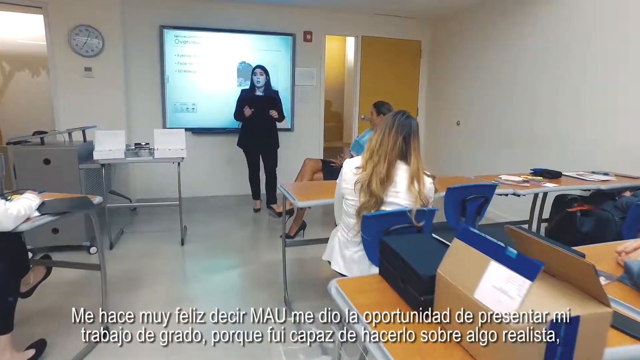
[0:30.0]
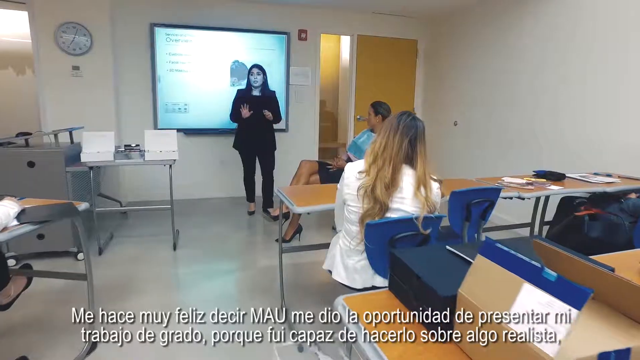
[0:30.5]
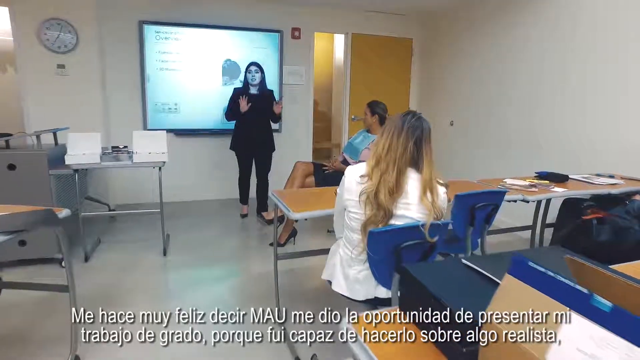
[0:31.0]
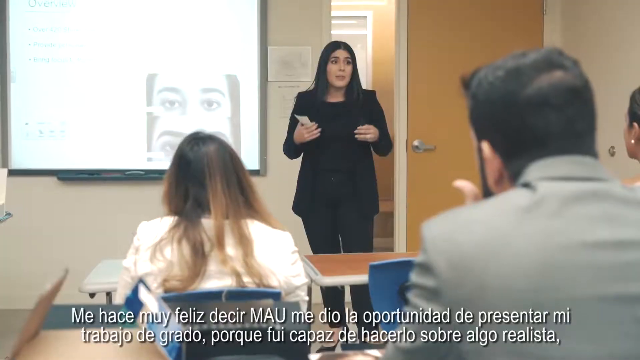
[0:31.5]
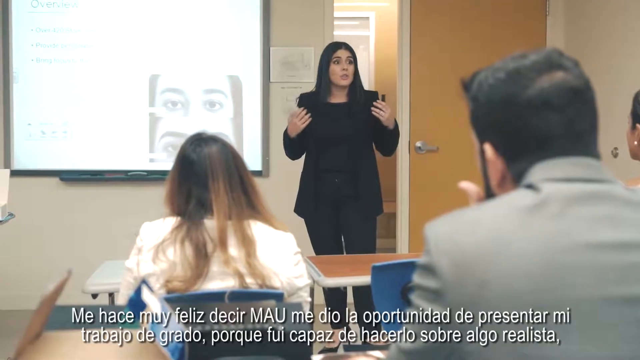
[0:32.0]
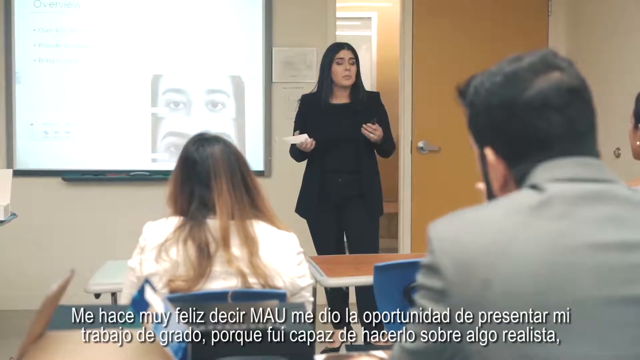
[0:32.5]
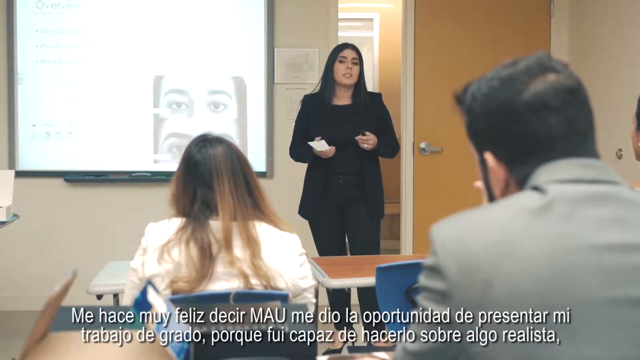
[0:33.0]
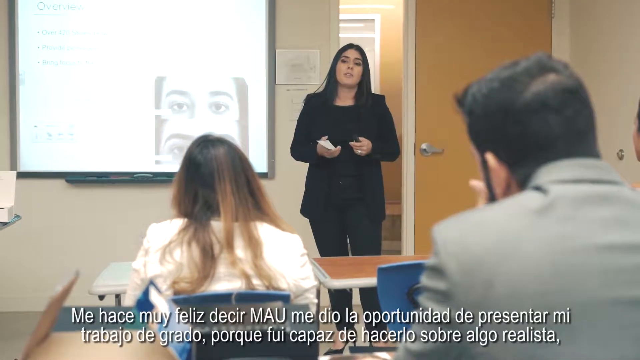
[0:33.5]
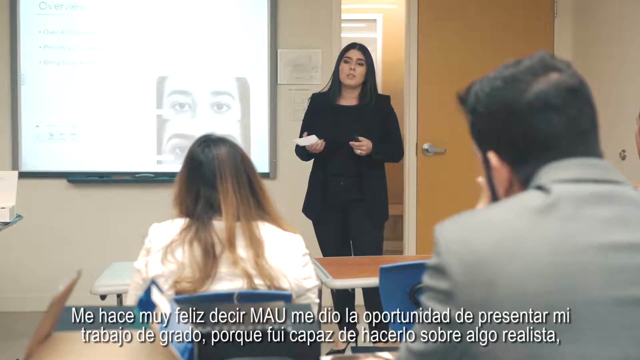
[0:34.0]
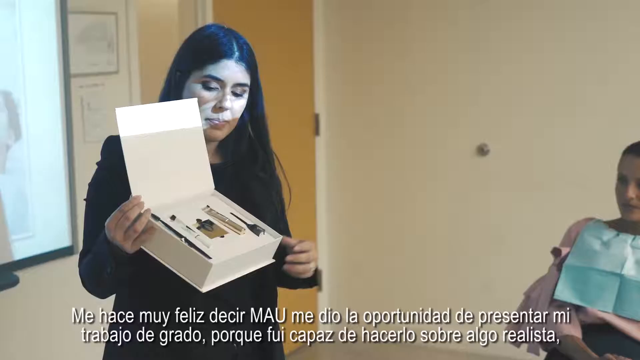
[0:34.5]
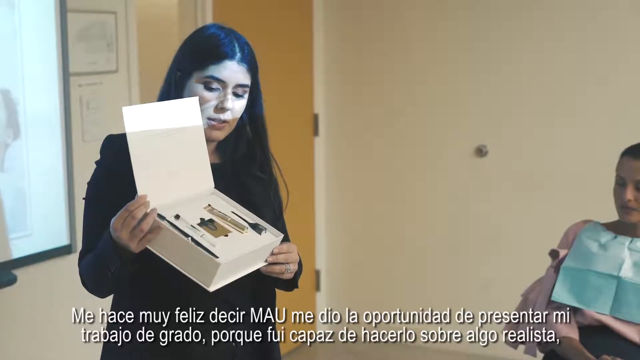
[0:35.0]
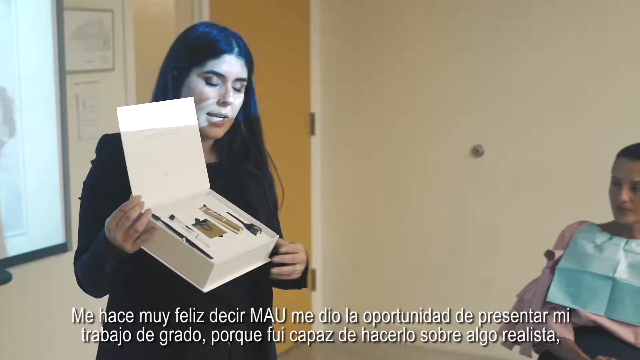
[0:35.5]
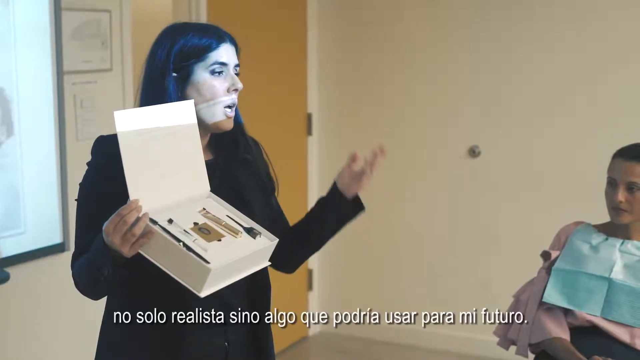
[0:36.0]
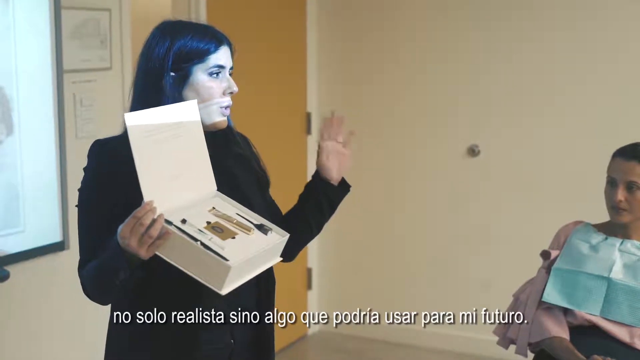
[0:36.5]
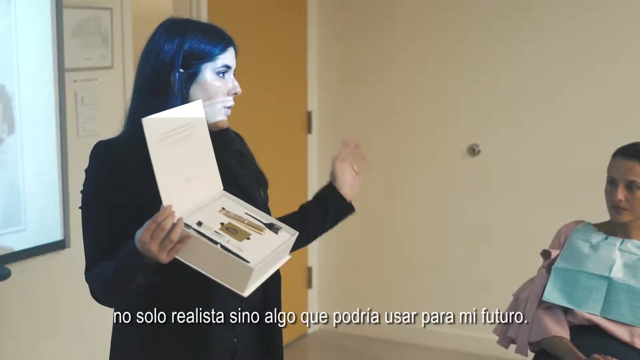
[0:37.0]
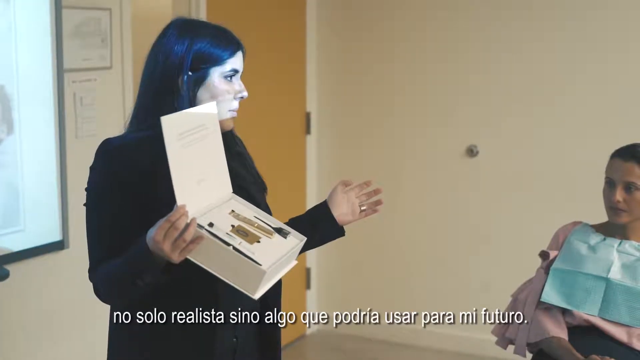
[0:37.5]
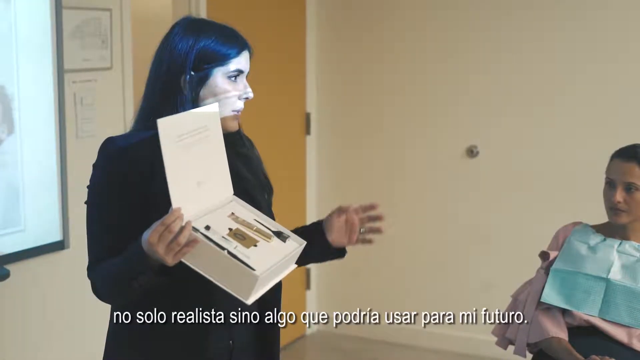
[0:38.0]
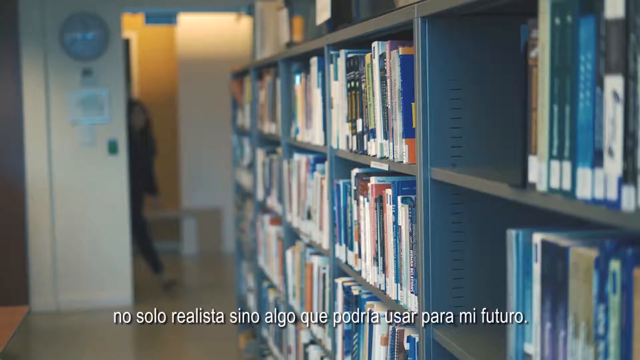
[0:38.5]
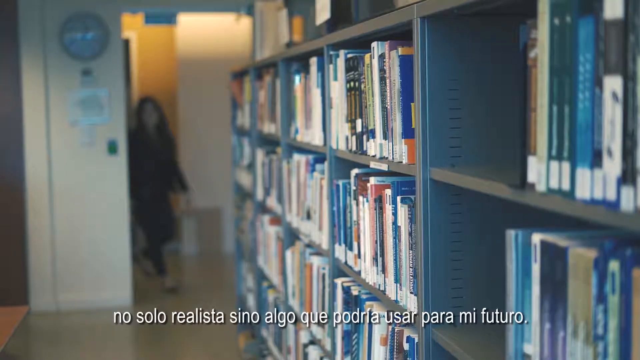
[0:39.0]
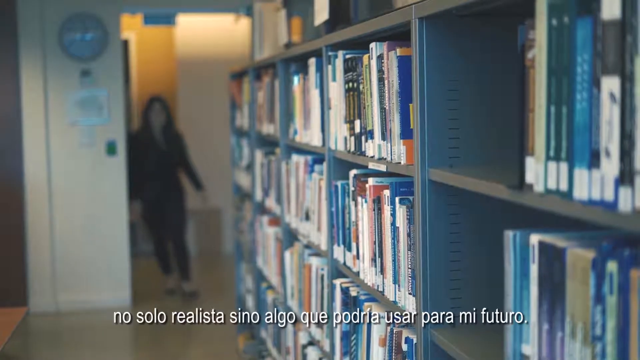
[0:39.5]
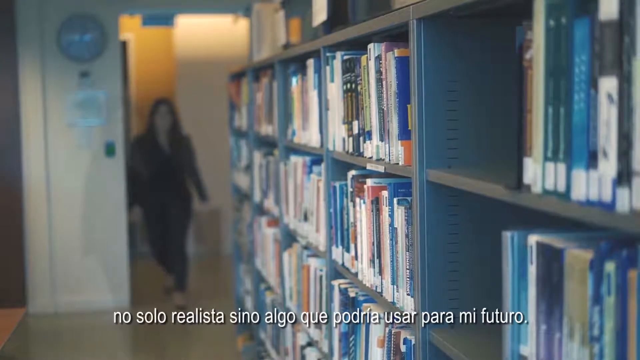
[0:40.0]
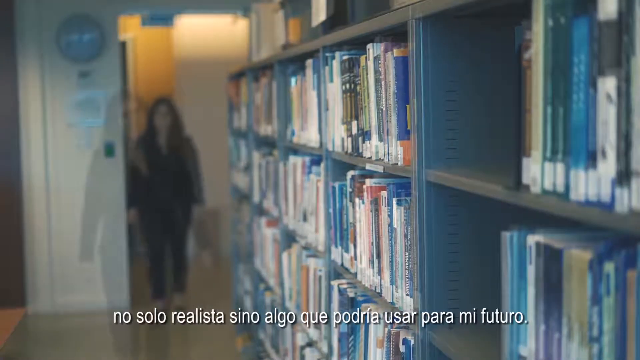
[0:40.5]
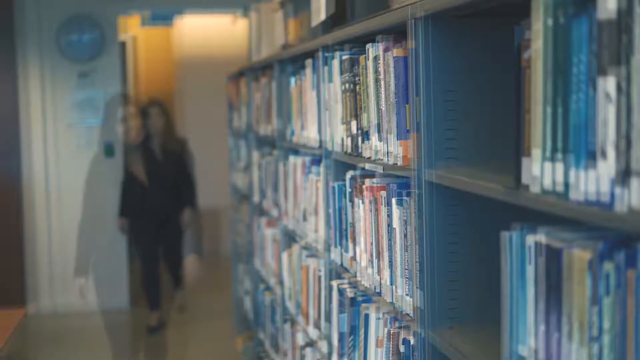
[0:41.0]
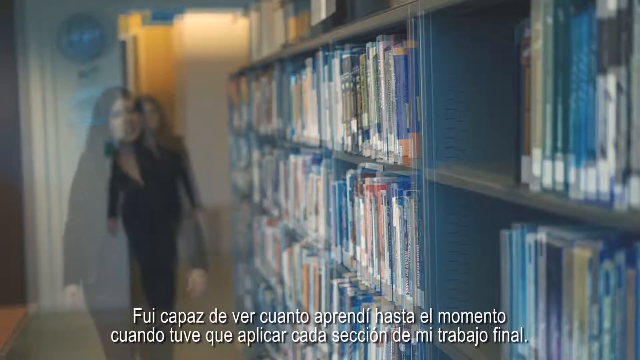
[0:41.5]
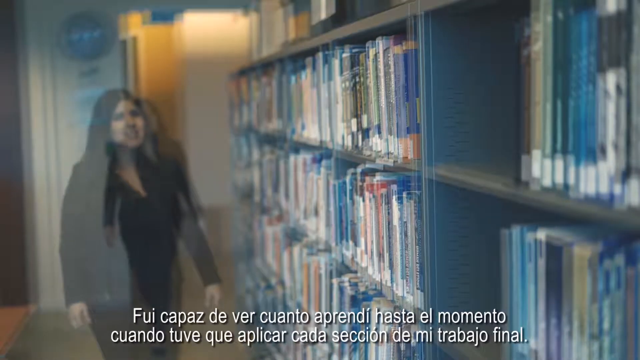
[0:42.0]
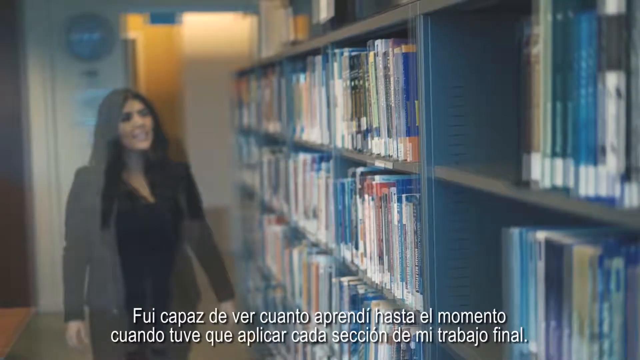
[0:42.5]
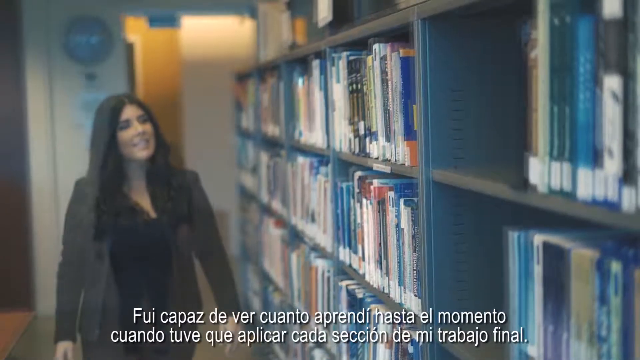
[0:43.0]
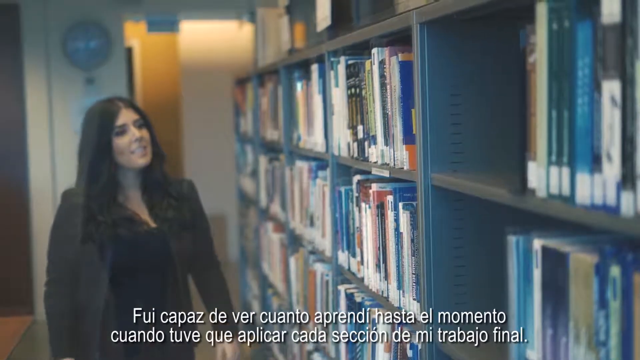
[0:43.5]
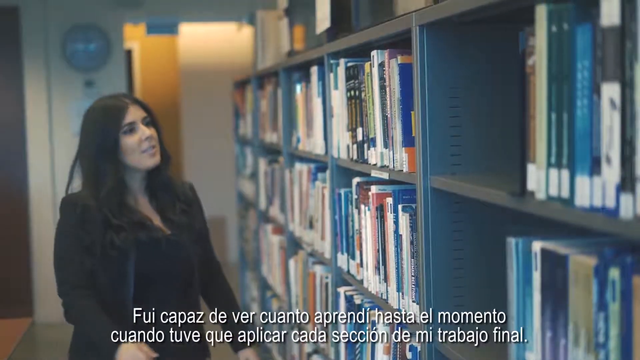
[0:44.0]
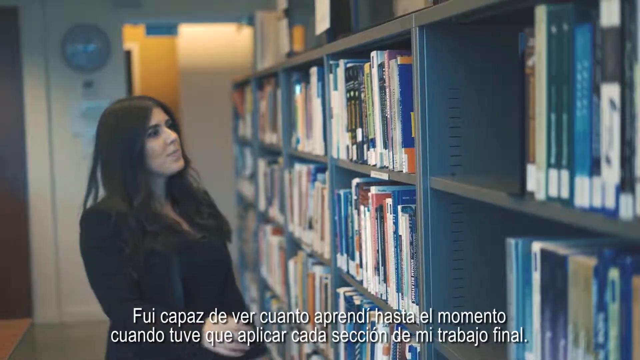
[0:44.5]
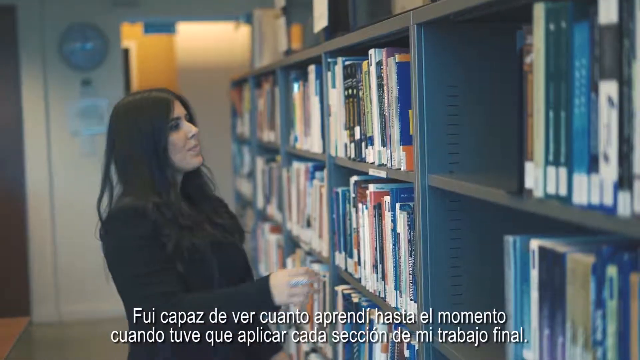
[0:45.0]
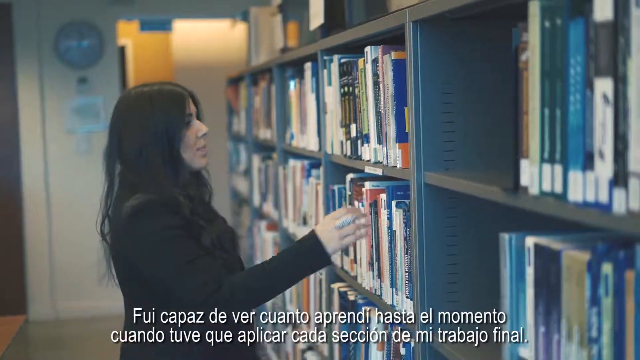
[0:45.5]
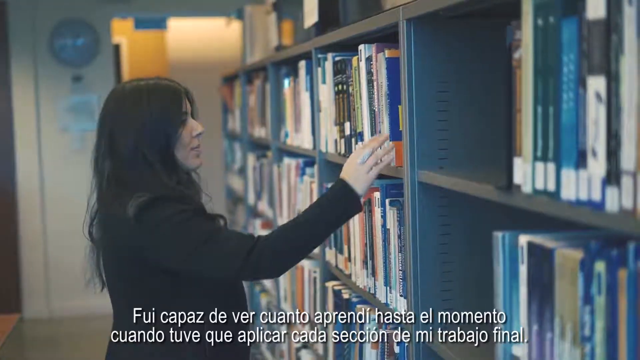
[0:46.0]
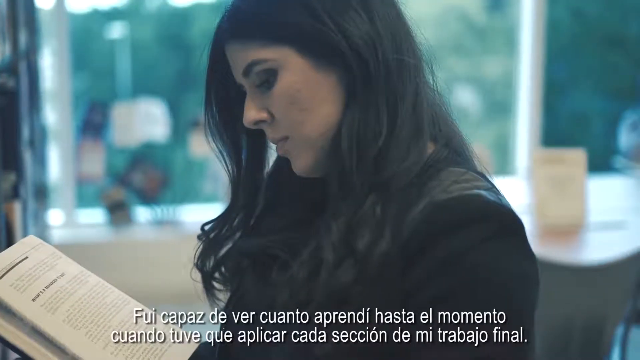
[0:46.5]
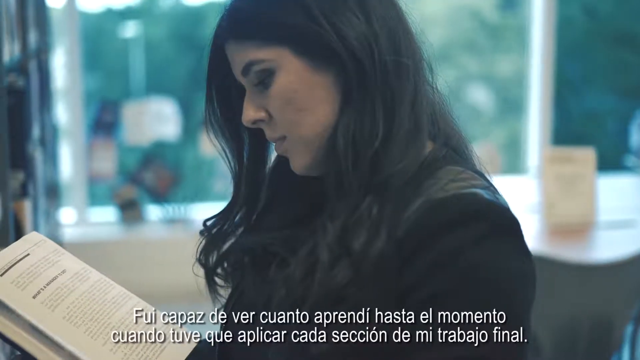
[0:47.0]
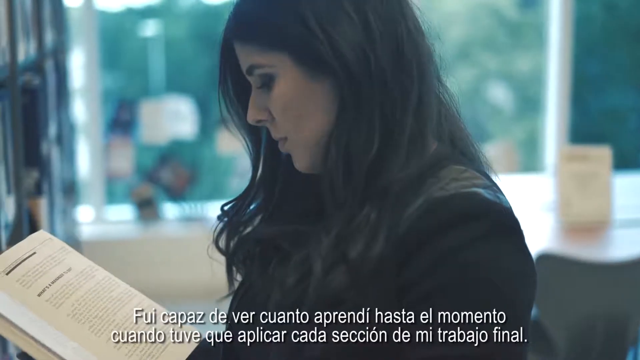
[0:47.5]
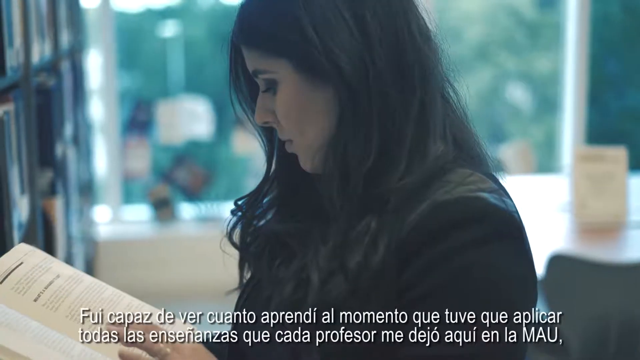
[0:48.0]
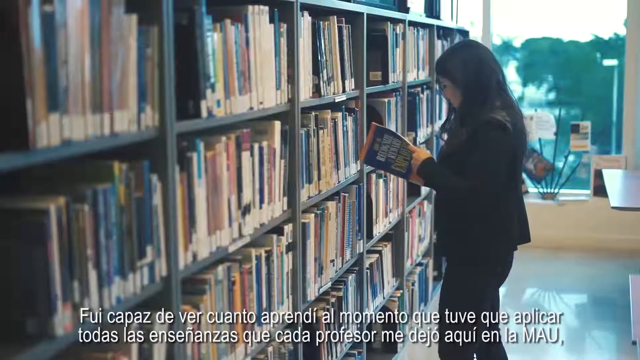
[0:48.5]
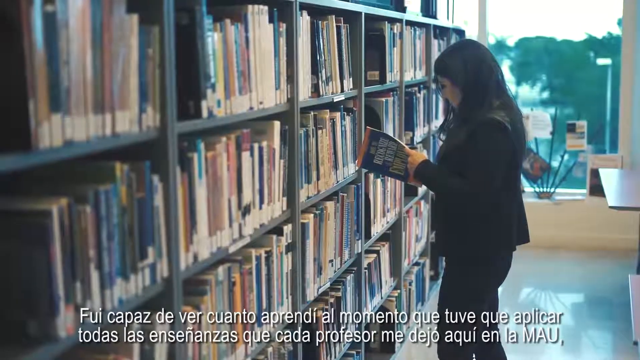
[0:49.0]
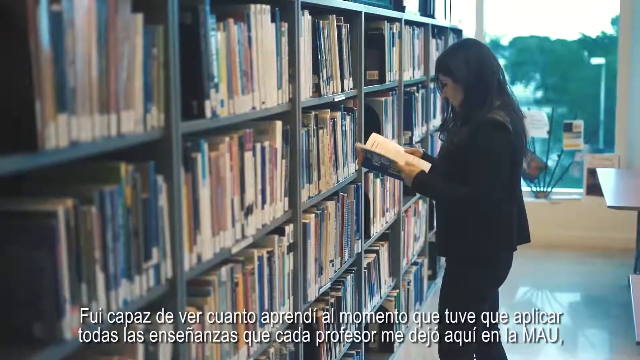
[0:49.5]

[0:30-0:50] The woman is at the front of the classroom, raising her hands as she teaches, while the other people look at her and listen. She continues teaching and then demonstrates by showing a white box with some things inside. Next she walks into another room full of books that looks like a library. She goes straight to the bookshelf, takes a book without hesitating, and starts reading it while still standing there, concentrating and taking her time reading.